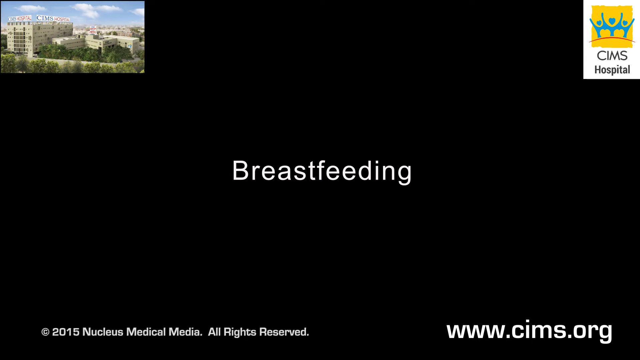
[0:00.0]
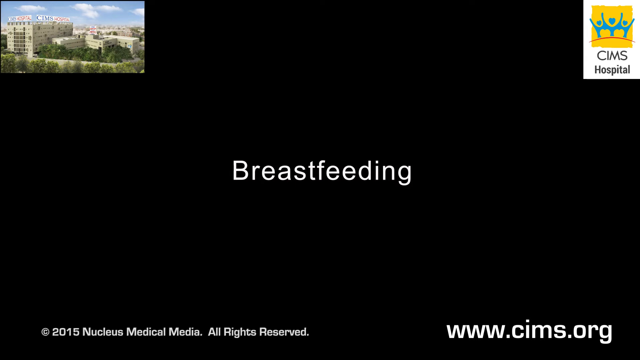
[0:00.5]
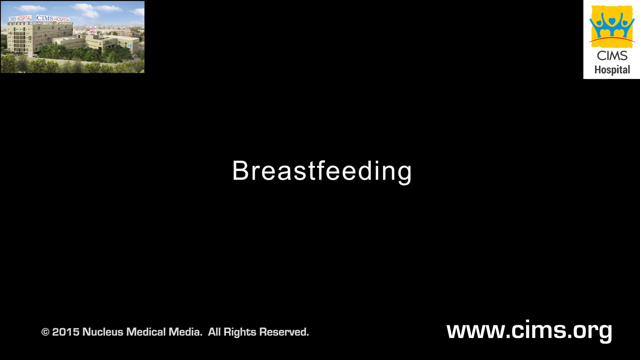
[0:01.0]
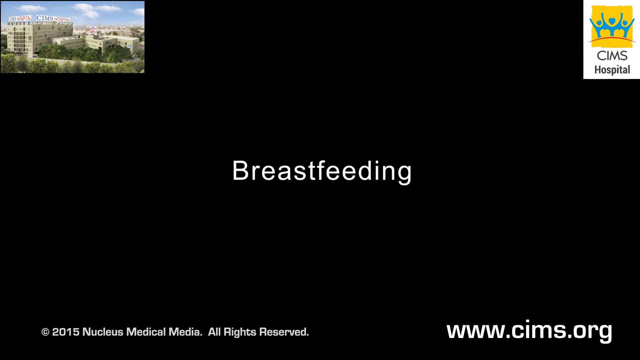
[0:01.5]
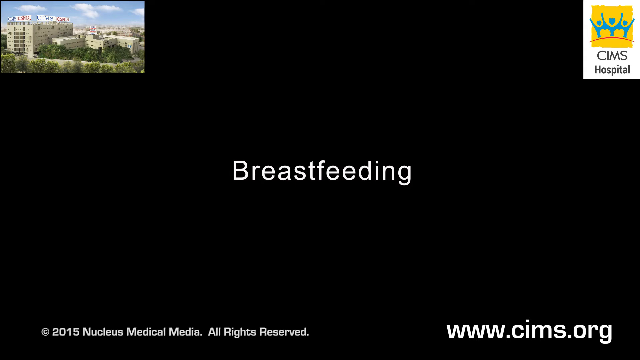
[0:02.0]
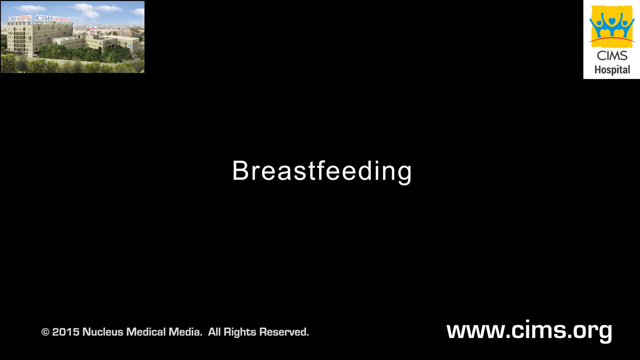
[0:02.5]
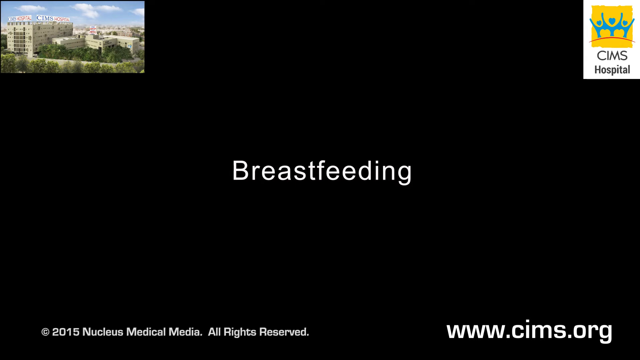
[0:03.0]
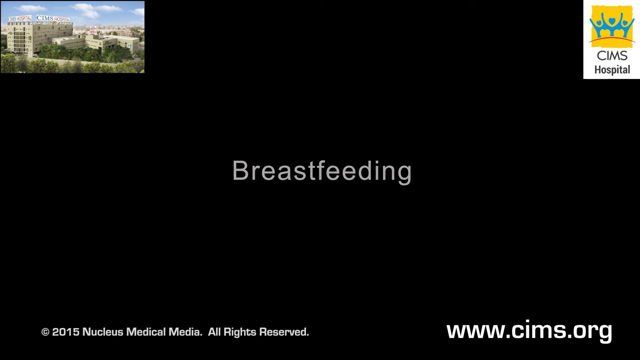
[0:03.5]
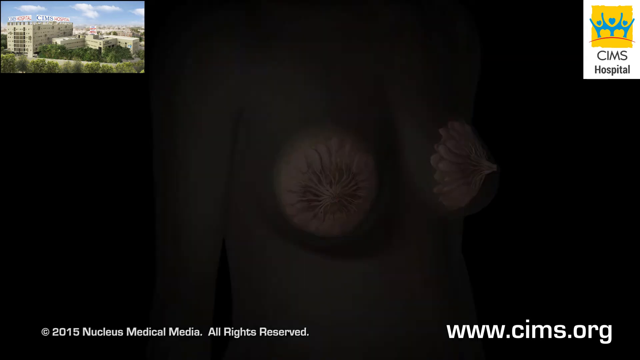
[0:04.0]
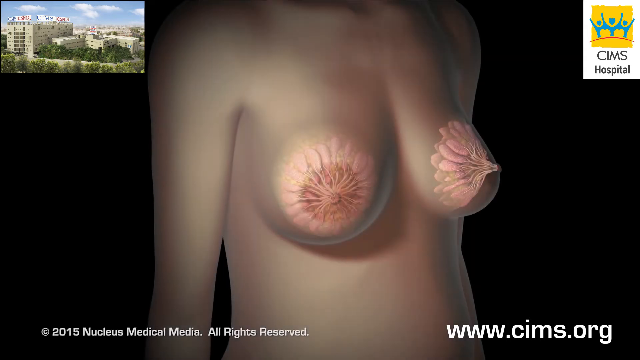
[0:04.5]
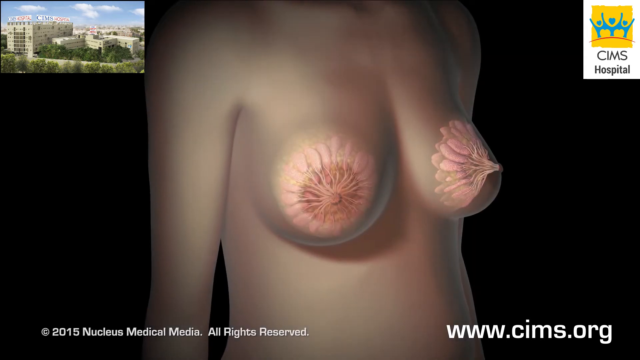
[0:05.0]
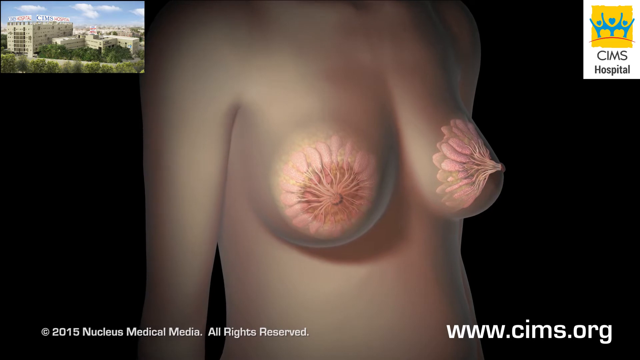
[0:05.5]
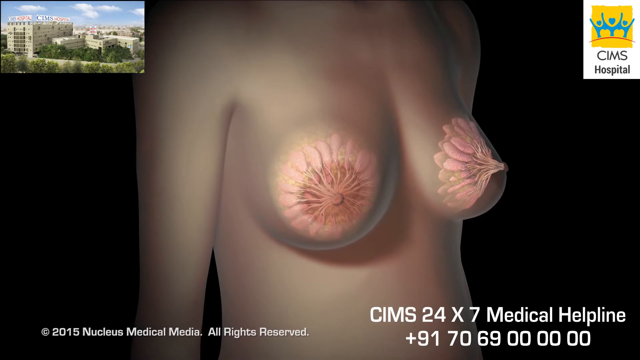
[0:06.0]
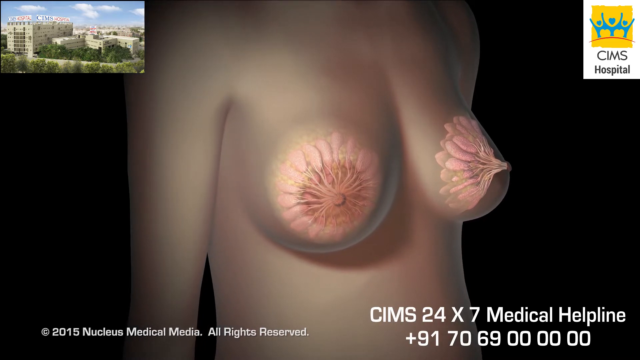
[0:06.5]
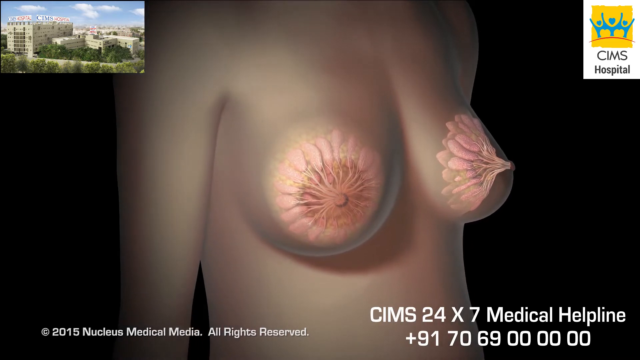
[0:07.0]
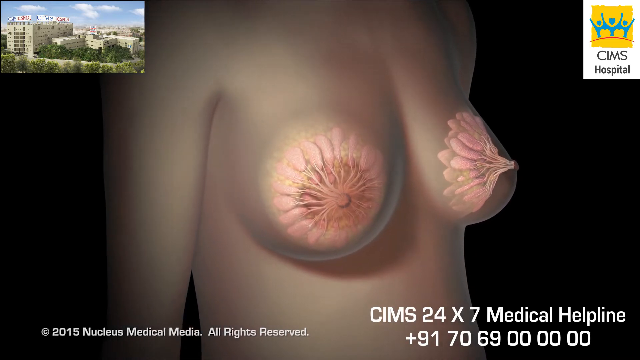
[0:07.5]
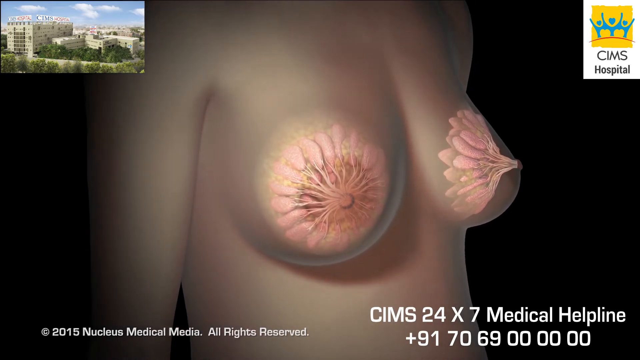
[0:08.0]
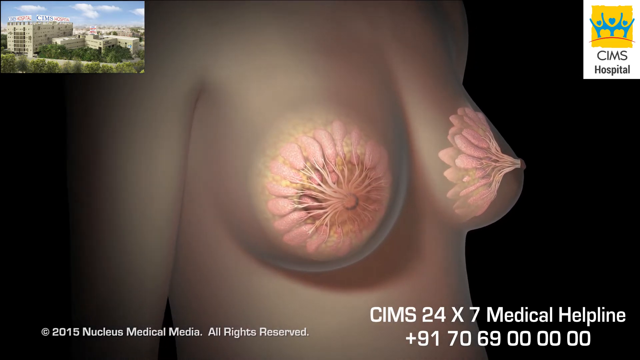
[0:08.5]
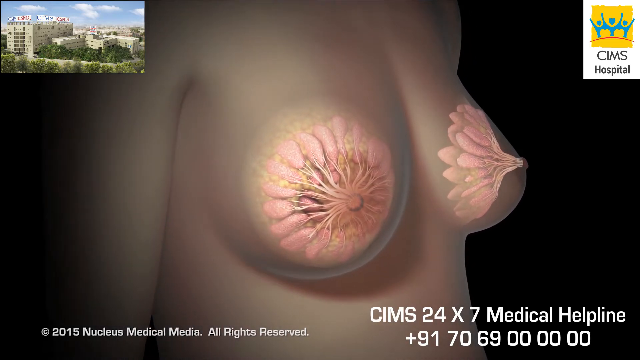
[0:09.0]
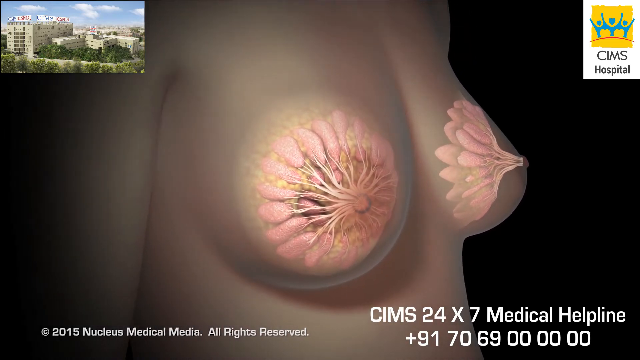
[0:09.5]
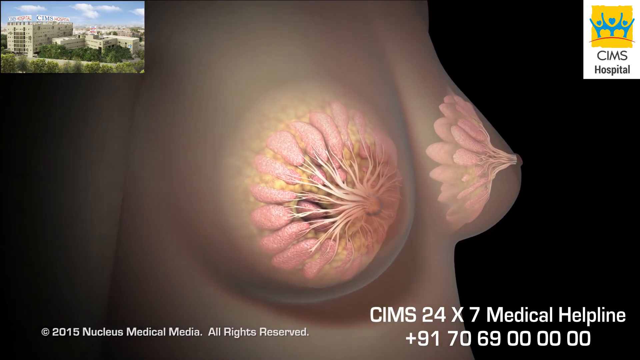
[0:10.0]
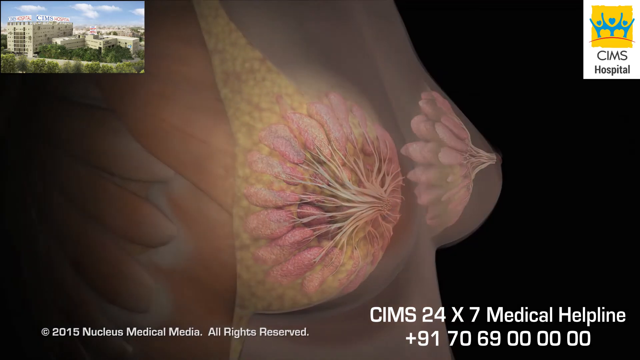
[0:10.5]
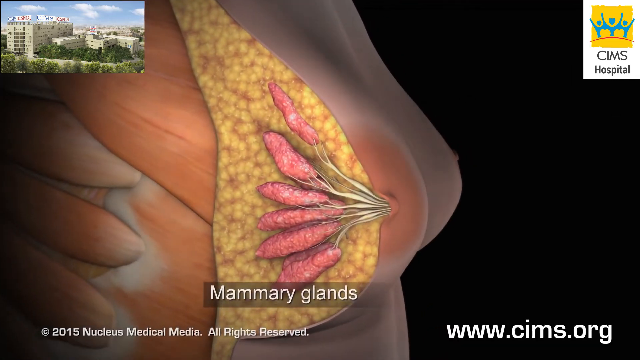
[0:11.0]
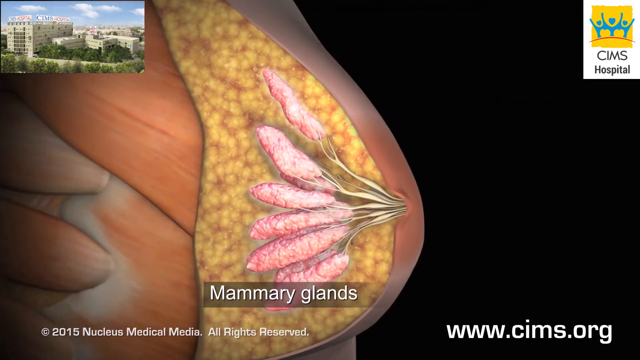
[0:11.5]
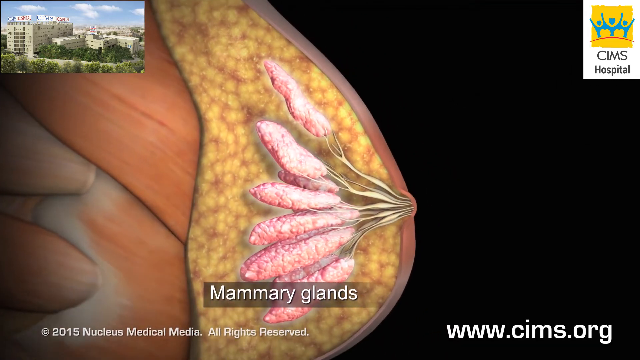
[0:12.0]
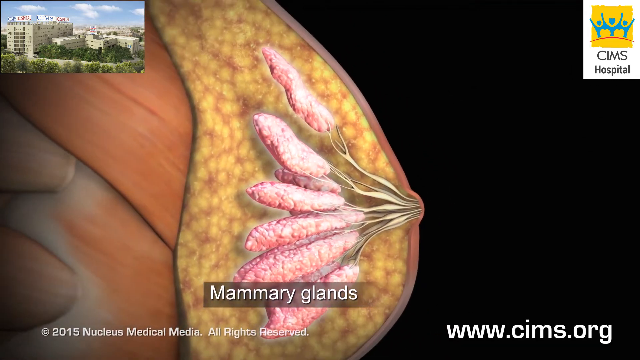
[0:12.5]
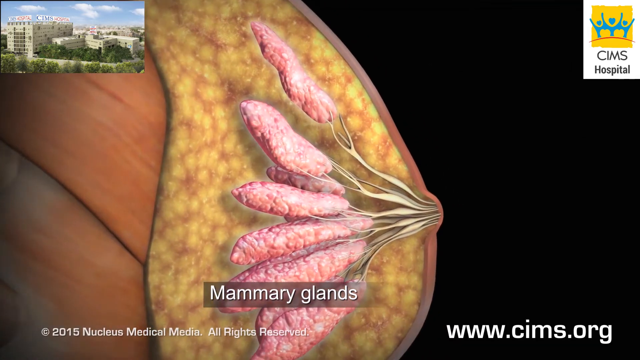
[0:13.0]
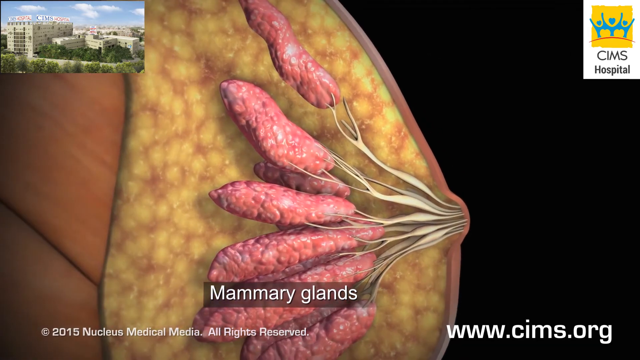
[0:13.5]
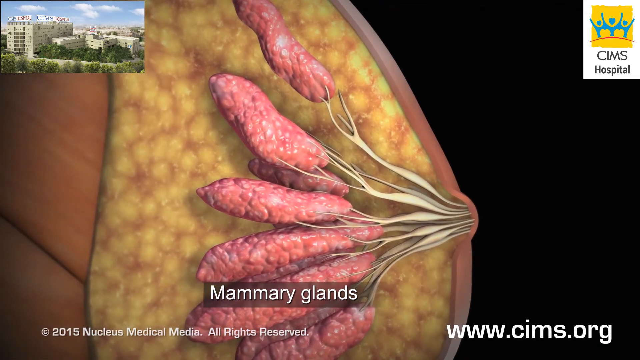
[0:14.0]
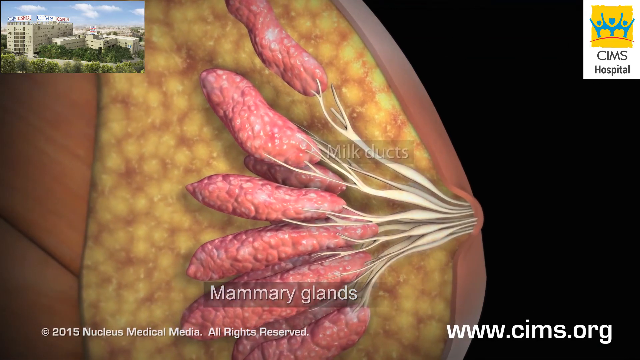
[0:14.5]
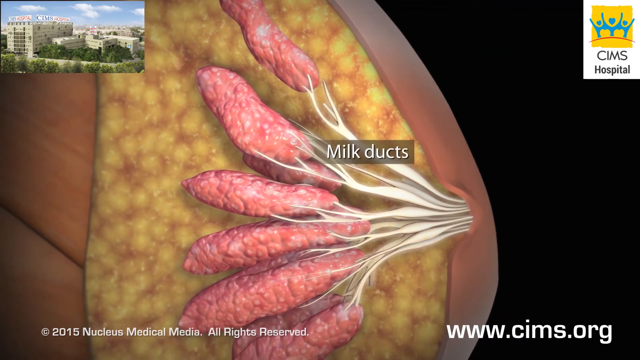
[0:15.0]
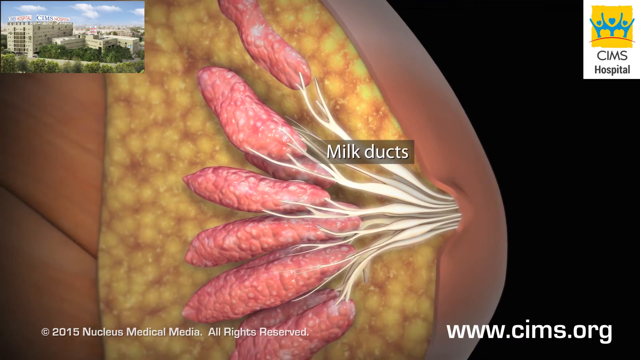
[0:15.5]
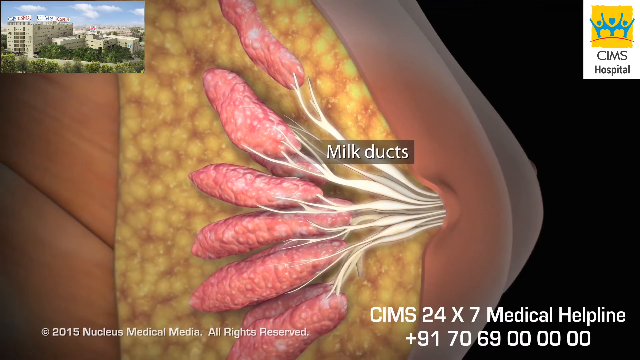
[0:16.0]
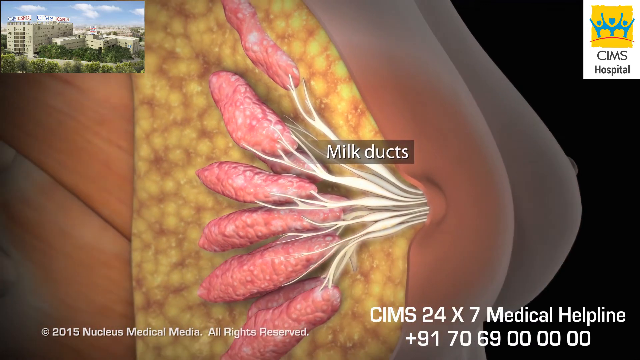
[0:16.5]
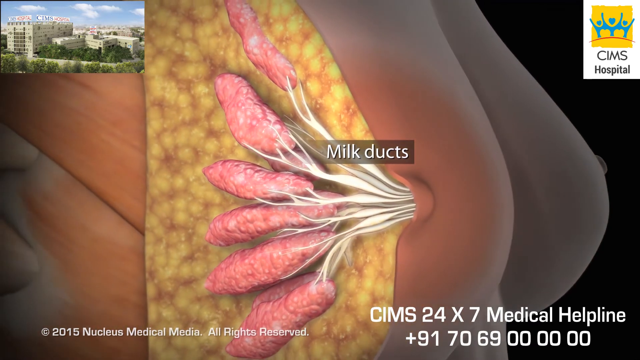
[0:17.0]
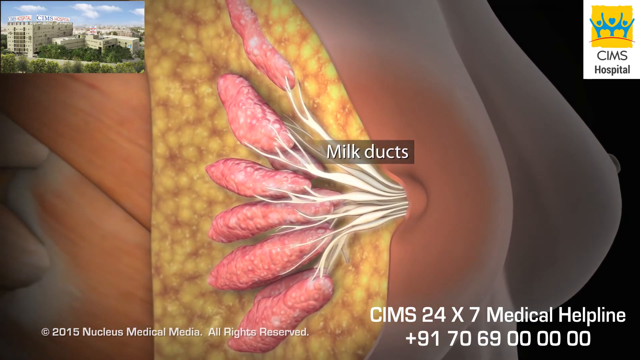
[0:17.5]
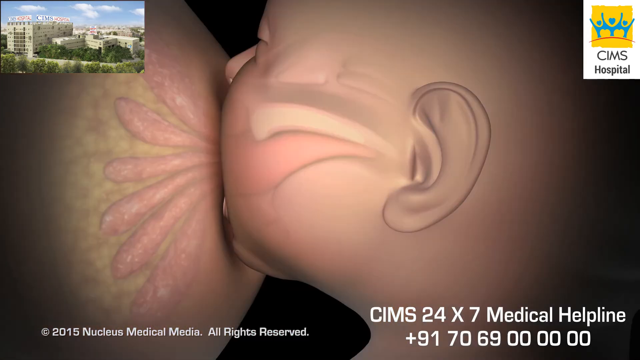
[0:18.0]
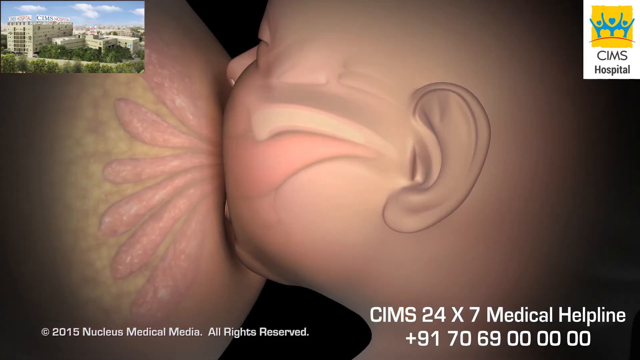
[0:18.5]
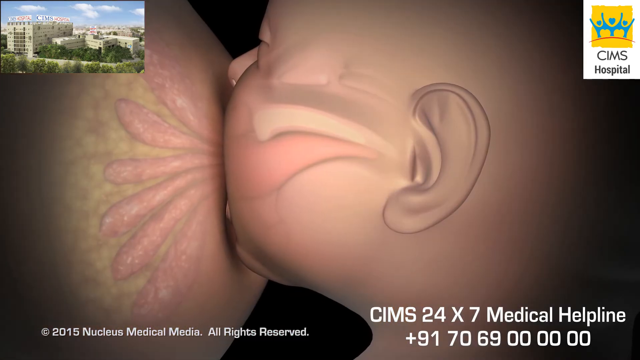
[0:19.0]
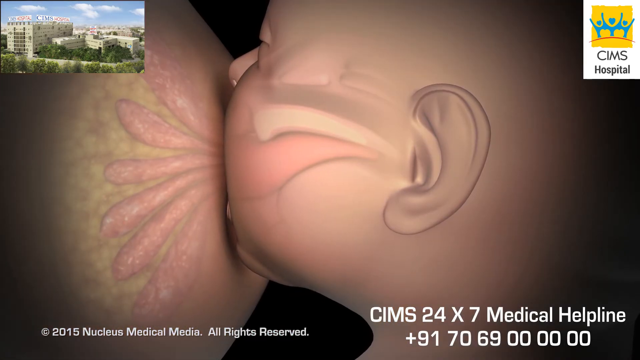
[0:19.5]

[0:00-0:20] A 3-D illustration shows a woman's exposed breasts in detail, revealing her mammary glands and milk ducts. An infant is breastfeeding from one of her breasts. The woman is Caucasian and stands in front of a black background. Fibrous tissue surrounds the mammary glands, and the milk ducts connect to the nipples. The video is sponsored by CIMS Hospital, which has a 24-7 medical helpline. The CIMS Hospital logo has a yellow background and foreground with a trio of blue people standing on top of a hill in front of a red horizon. A phone number and the website cims.org are given for help.